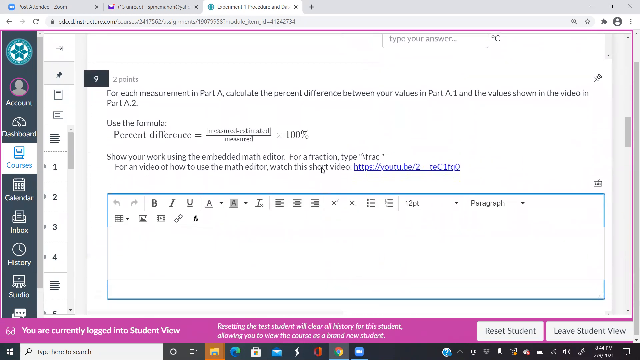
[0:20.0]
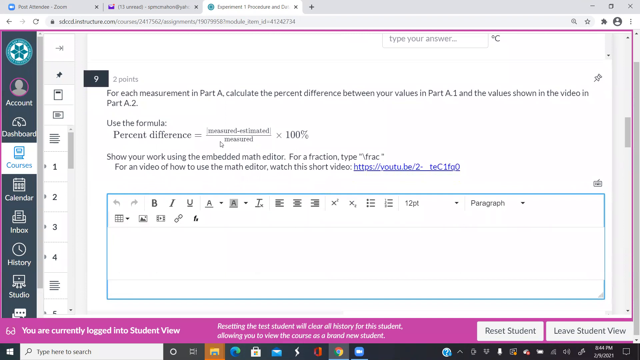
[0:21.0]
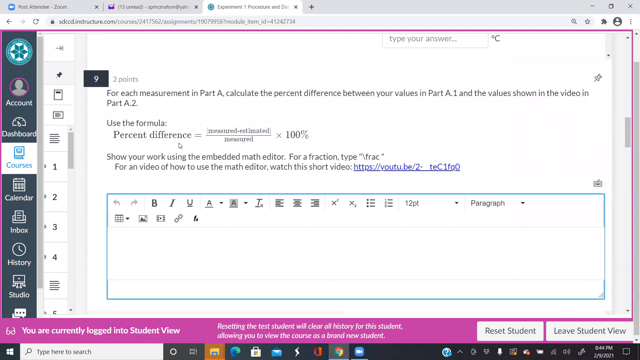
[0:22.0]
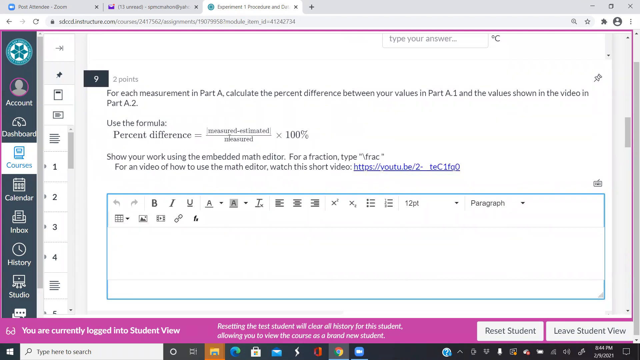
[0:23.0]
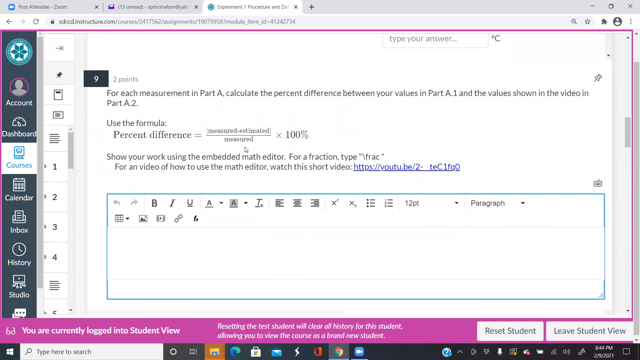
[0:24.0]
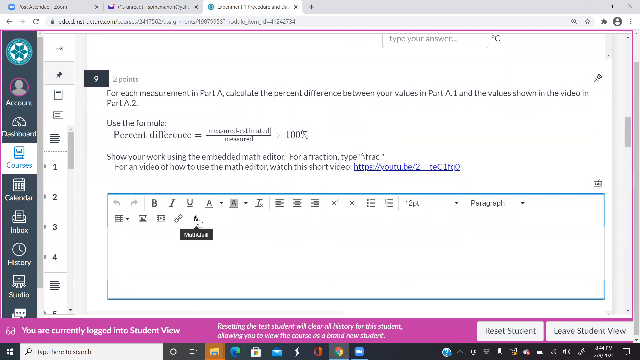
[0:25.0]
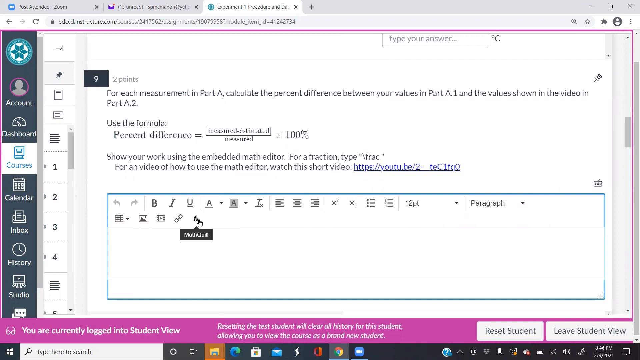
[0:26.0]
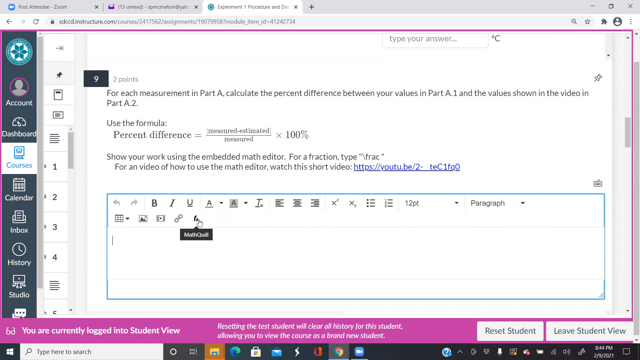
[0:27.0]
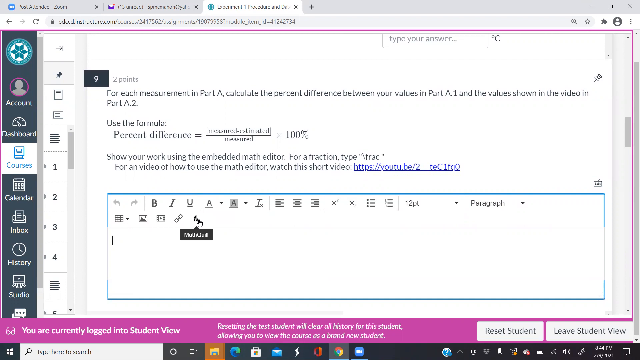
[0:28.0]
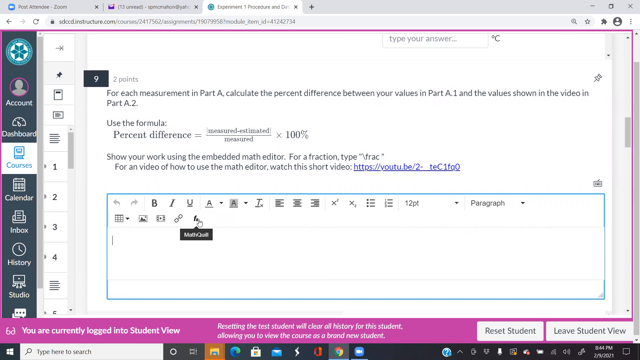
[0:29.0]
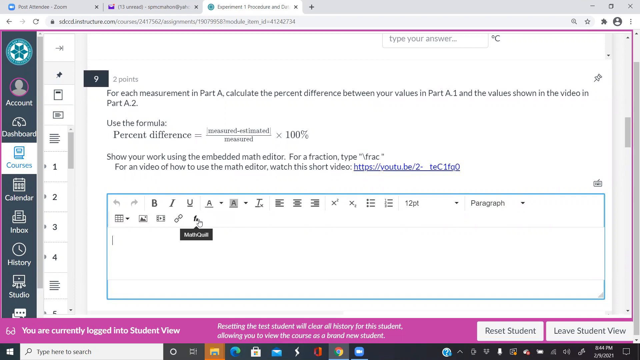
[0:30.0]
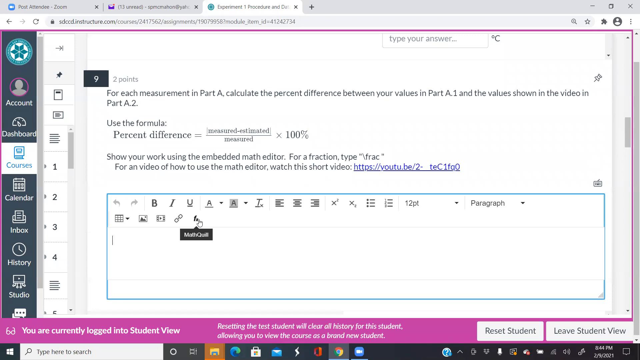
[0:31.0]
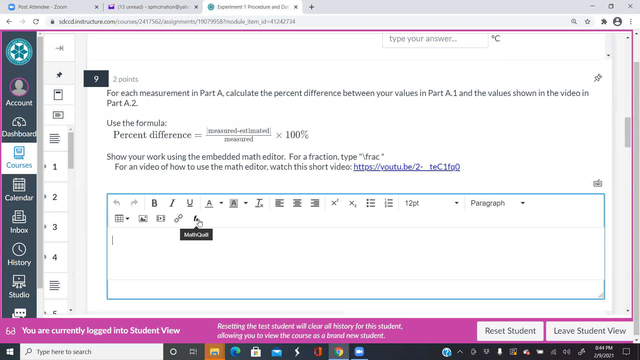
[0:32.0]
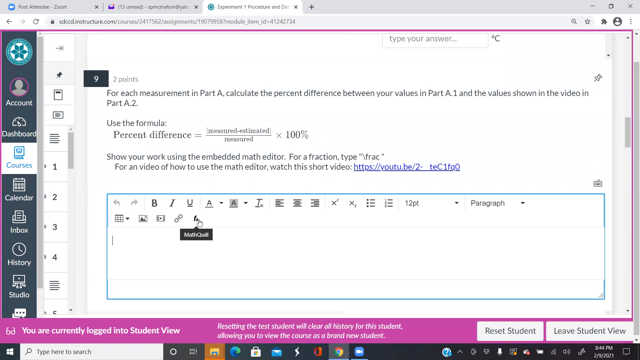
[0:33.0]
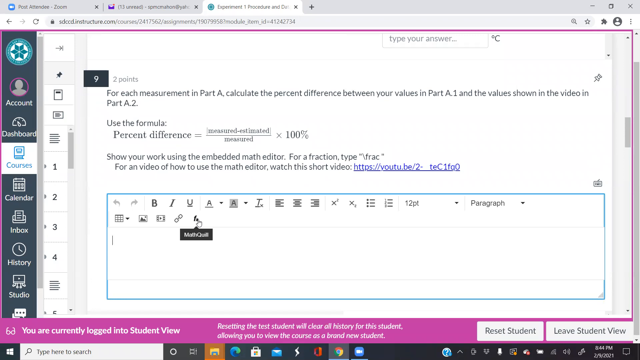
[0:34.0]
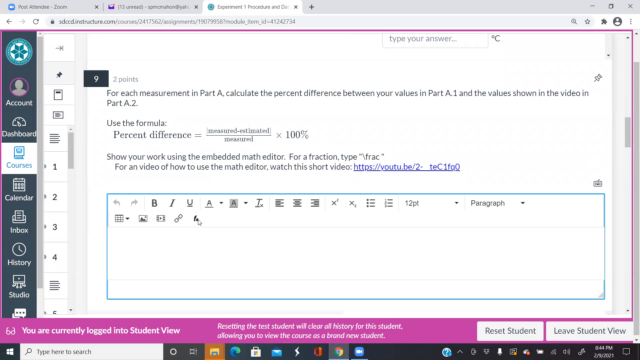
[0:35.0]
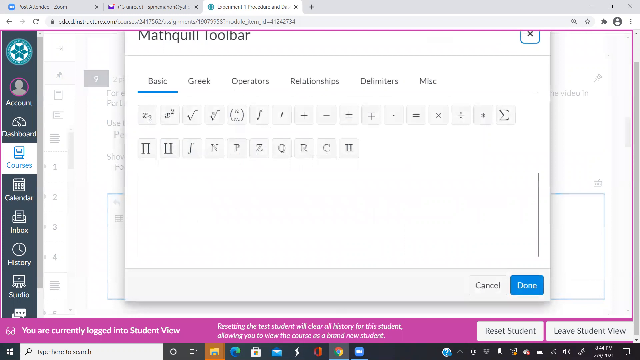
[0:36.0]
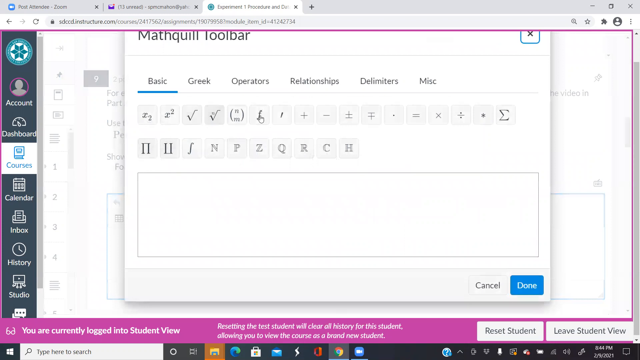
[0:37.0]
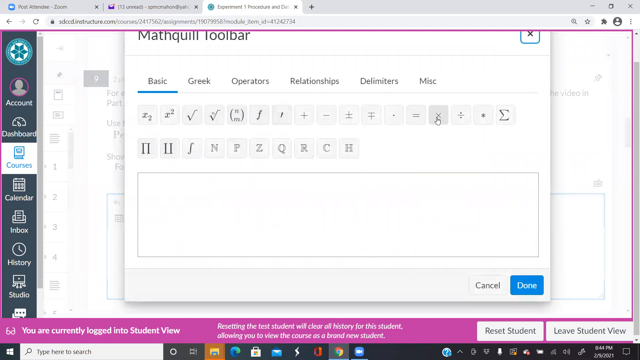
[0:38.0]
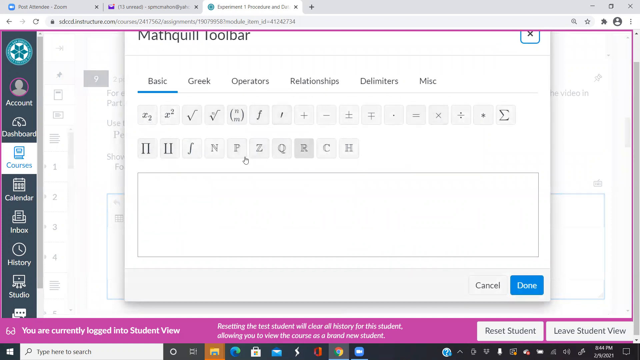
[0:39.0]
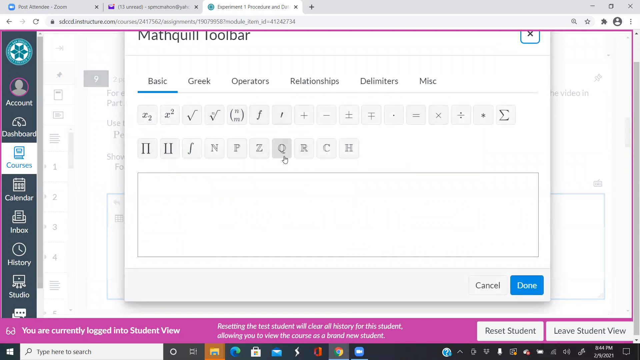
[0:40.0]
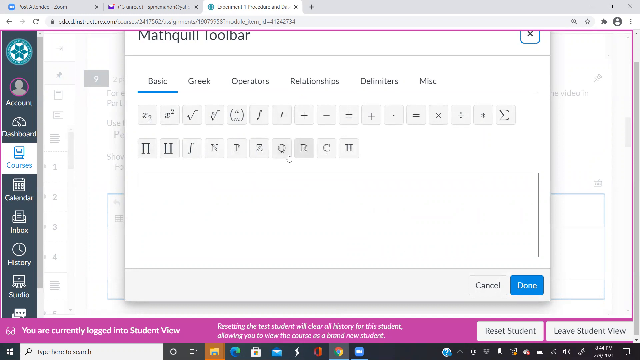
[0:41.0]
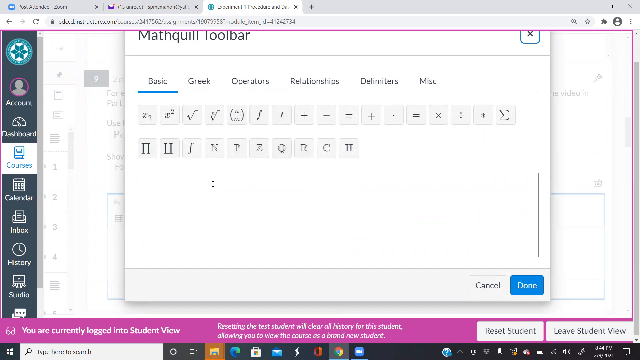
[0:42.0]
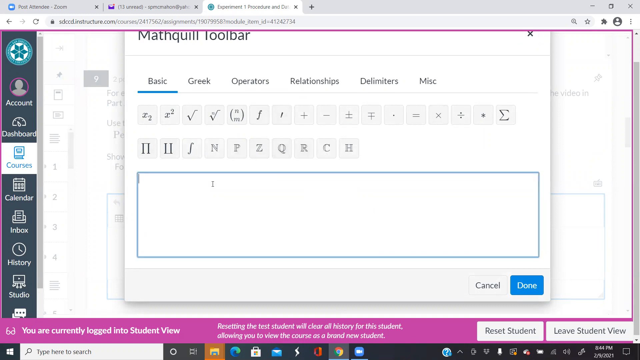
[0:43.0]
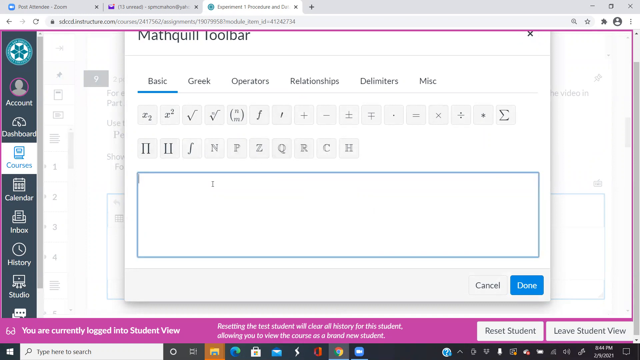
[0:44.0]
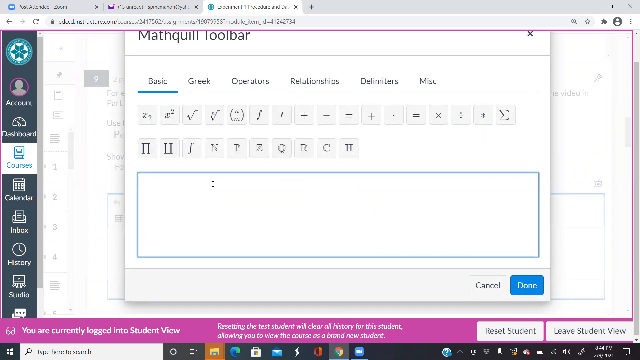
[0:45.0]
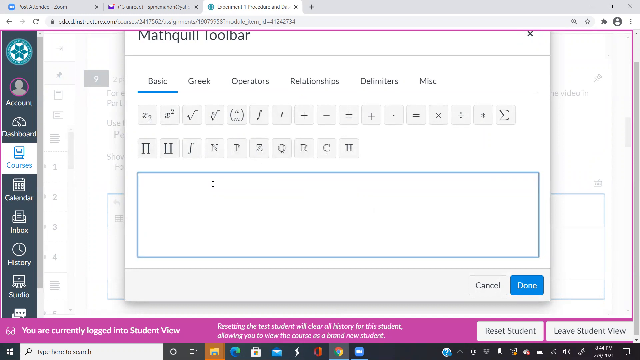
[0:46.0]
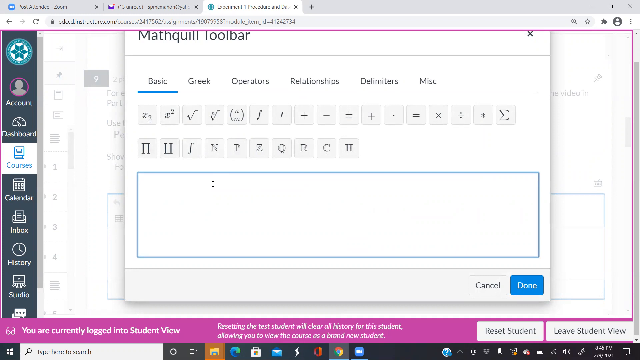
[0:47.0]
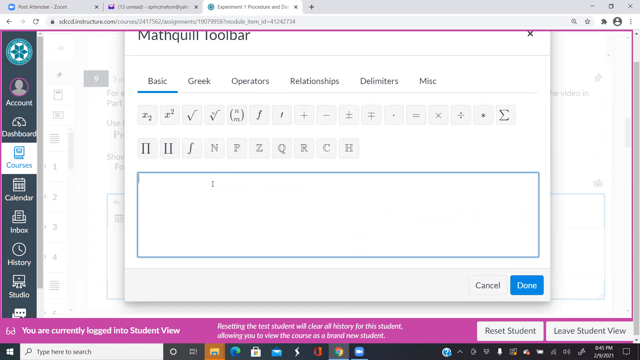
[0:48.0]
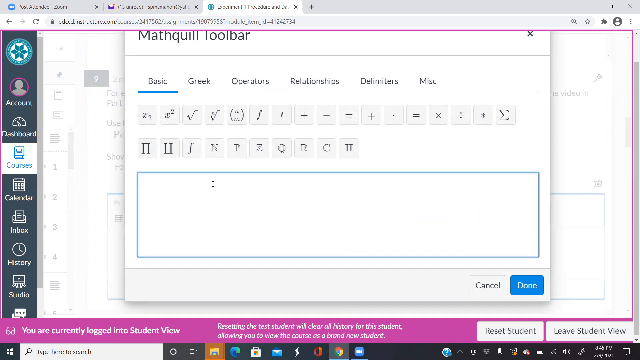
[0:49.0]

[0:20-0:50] A student logged into the student portal is doing an assignment that looks like a math assignment. It says "Experiment 1 Data Sheet", and there is part A, called "Estimate", with questions to be answered below it. The page has two parts: questions on the left and the area for answering them on the right. On the far left are the dashboard, account, calendar, inbox, history, studio and courses tabs. The student scrolls down to a question requiring calculations about percent difference, the mouse arrow moving around the screen. The student then starts typing the answer using a MathQuill toolbar and types in a fraction as the answer.